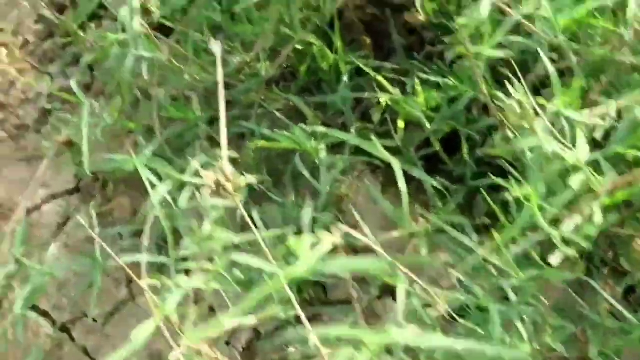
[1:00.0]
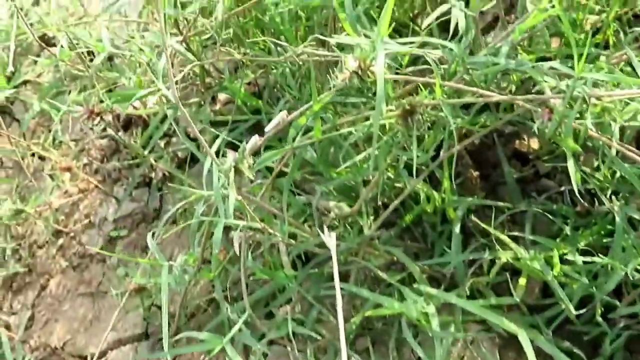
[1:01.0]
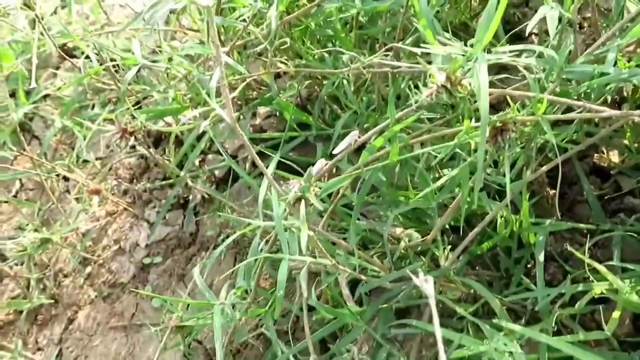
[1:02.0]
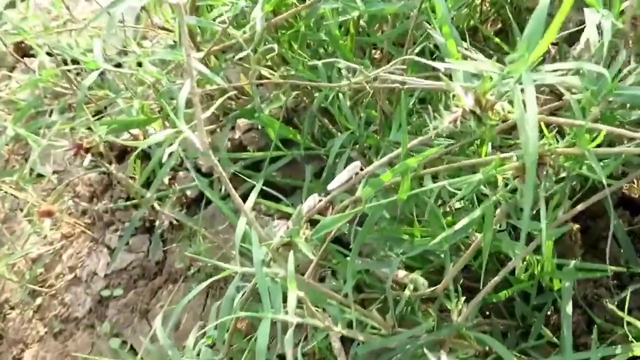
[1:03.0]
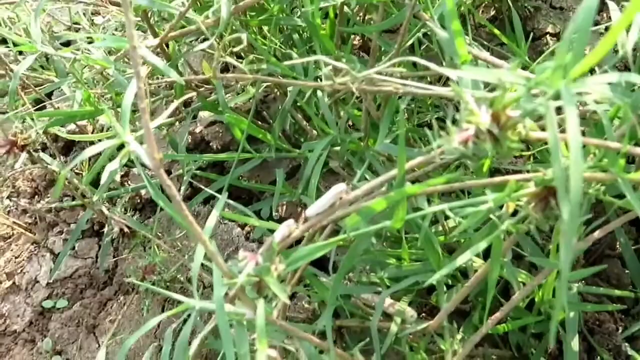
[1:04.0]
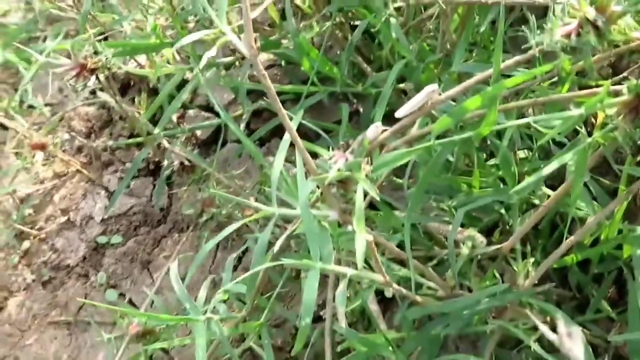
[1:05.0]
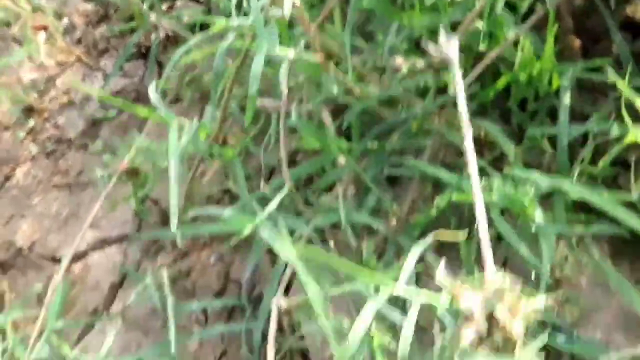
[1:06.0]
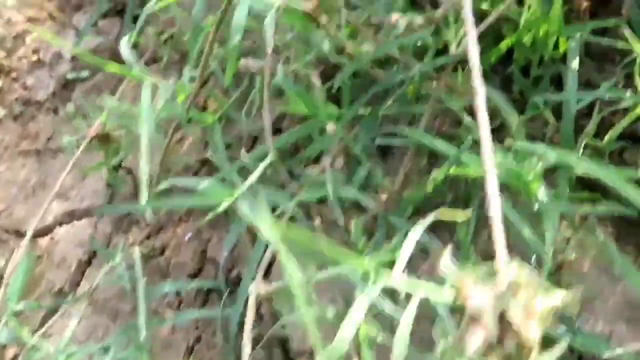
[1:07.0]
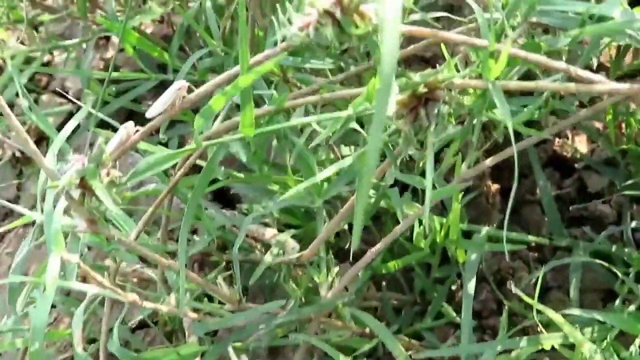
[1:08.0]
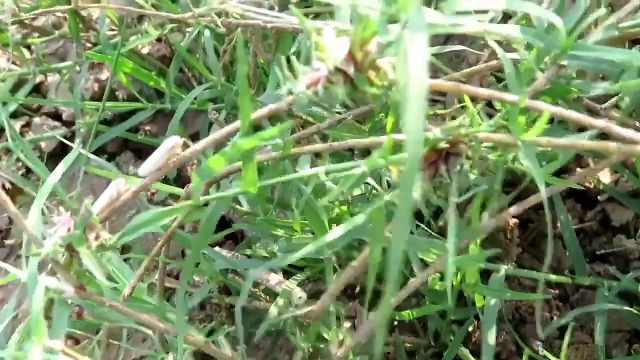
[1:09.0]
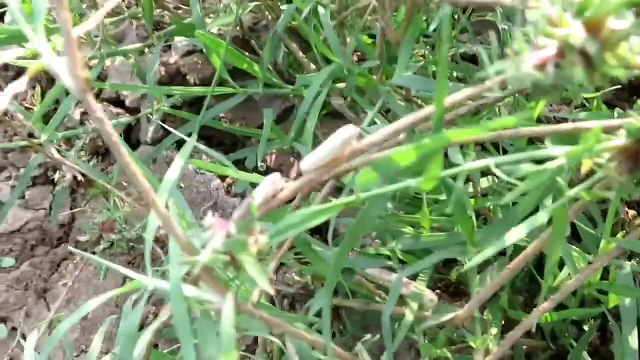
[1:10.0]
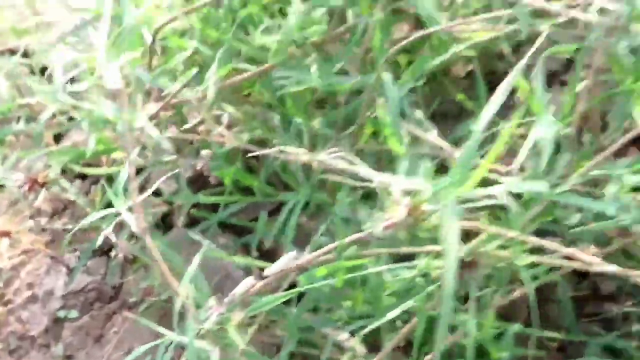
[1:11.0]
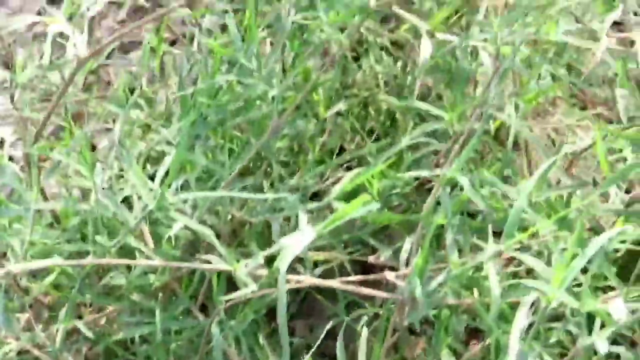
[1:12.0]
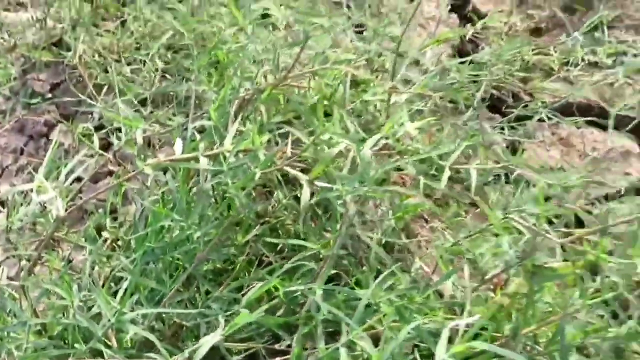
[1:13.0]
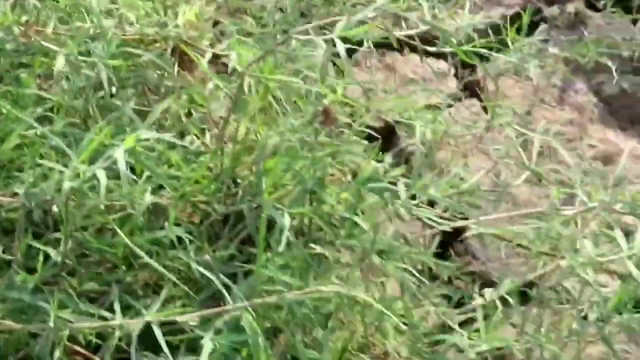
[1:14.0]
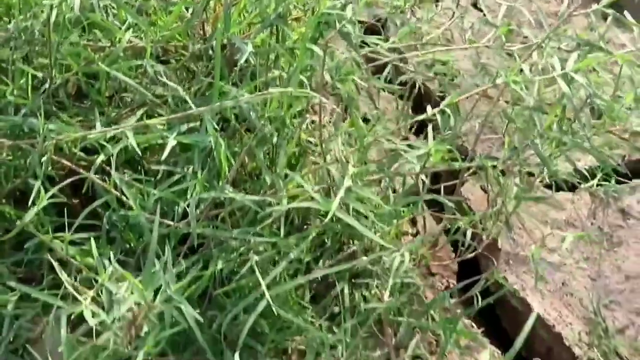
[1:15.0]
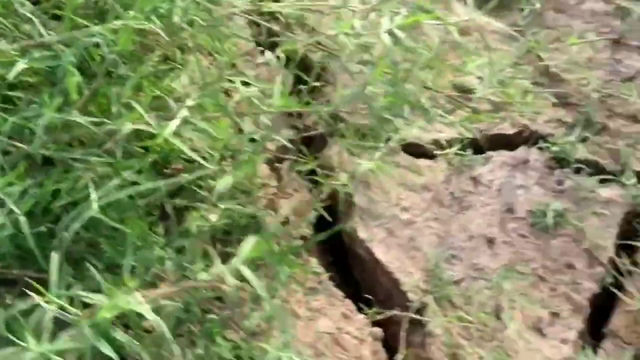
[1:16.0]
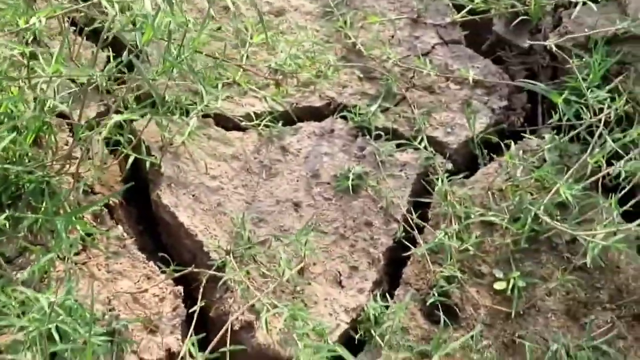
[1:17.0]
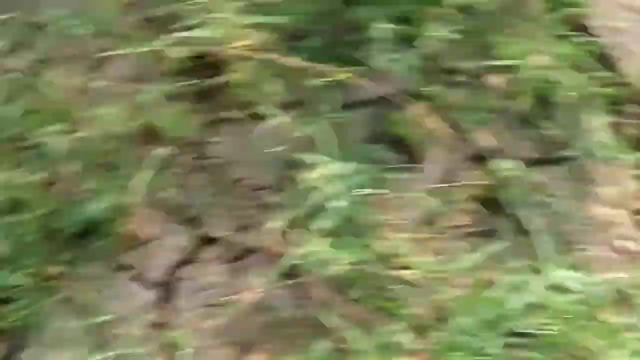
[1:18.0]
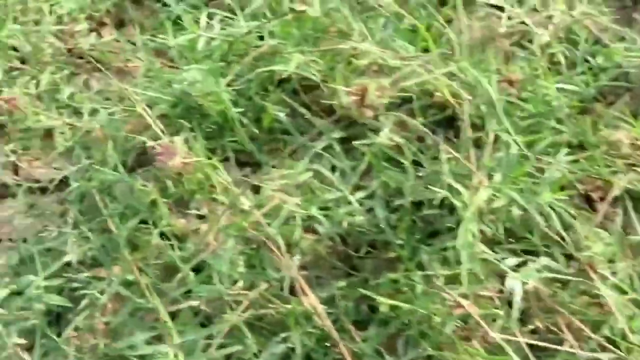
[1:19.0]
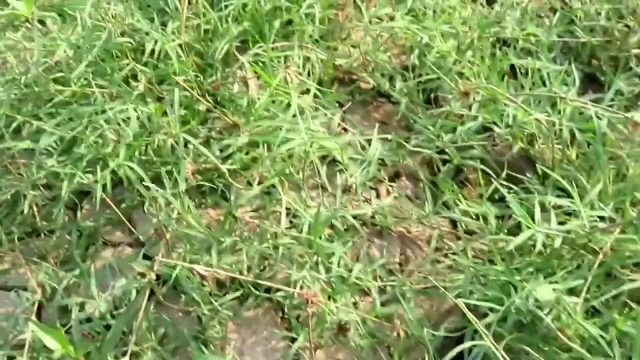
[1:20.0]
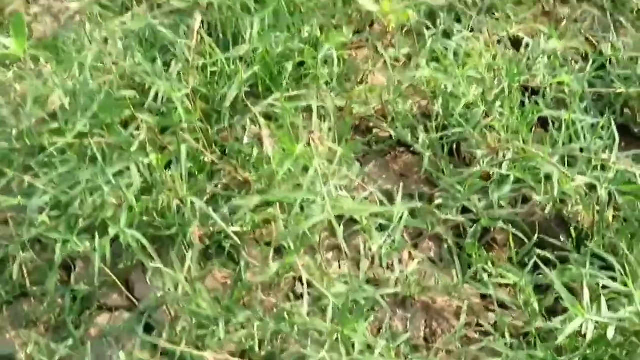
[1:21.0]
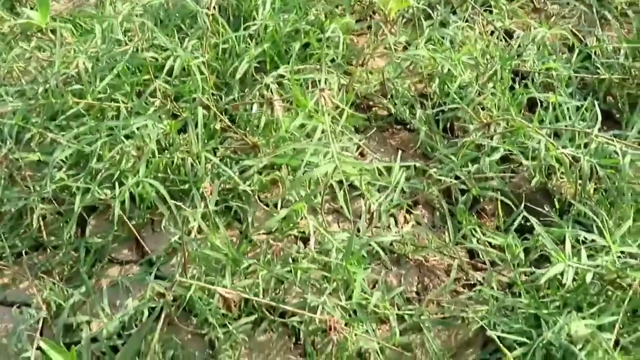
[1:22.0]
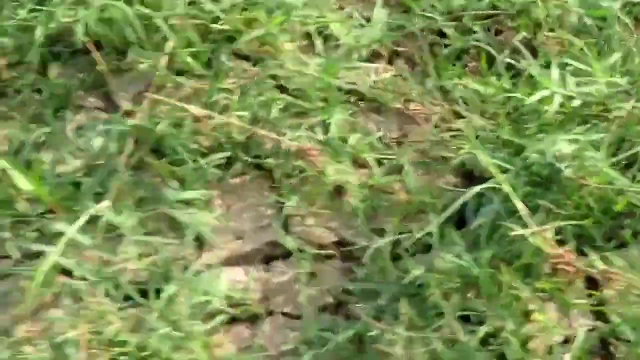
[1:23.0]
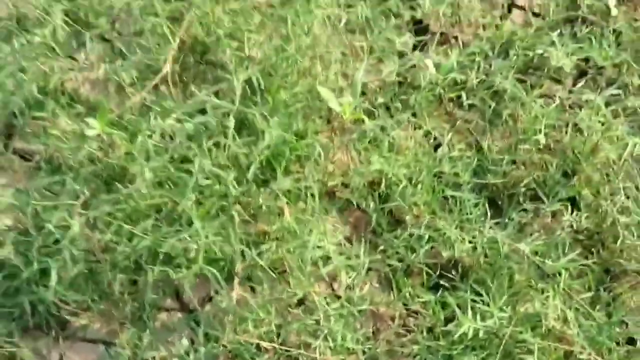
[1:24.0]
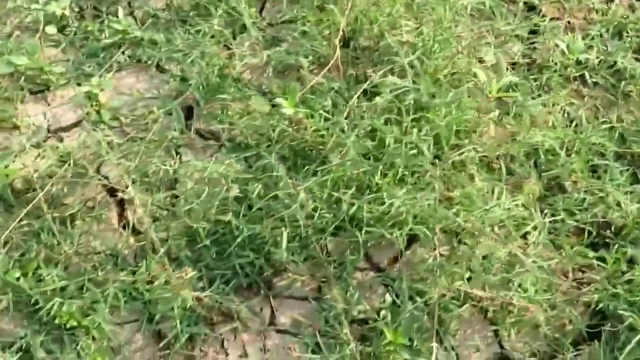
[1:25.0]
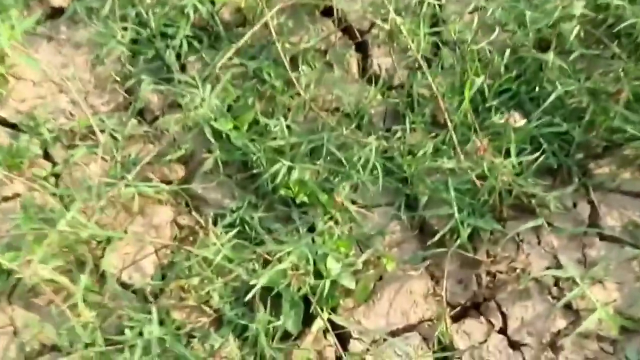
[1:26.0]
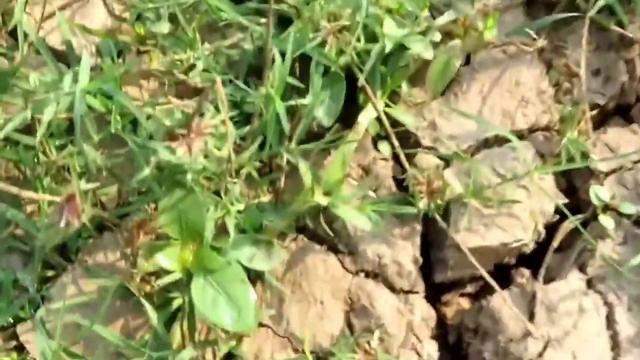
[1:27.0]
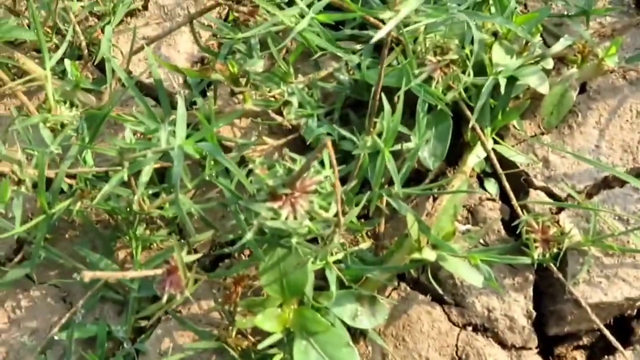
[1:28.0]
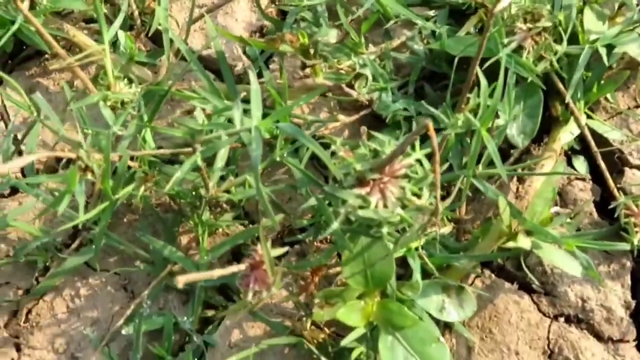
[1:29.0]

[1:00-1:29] Long dry grass is shown, and the camera pans to several insects along one of the longer, more branchy strands of grass. The insects are small and light brown and appear to be some sort of cicada. Two are completely visible and one is partially visible, and they remain static and unmoving on the branch. The camera lingers there briefly, then moves up and away, showing the dirt and grass again. It does not return to the bugs, instead panning back to the cracked ground and the grass and settling back onto the nettles seen at the beginning. No people appear; the only creatures shown are the three bugs on the stick.